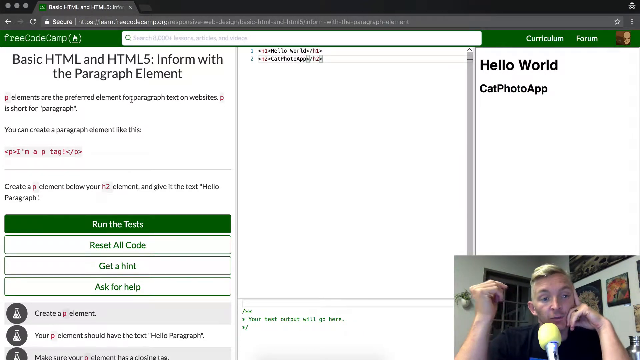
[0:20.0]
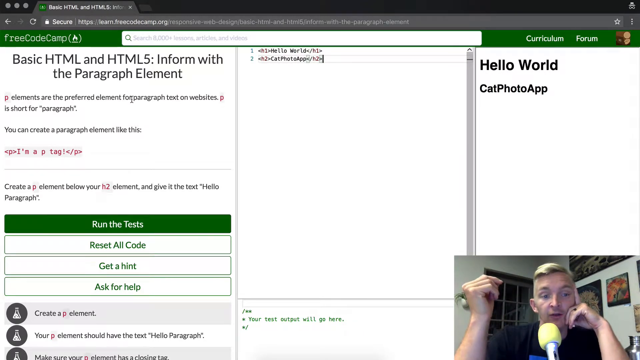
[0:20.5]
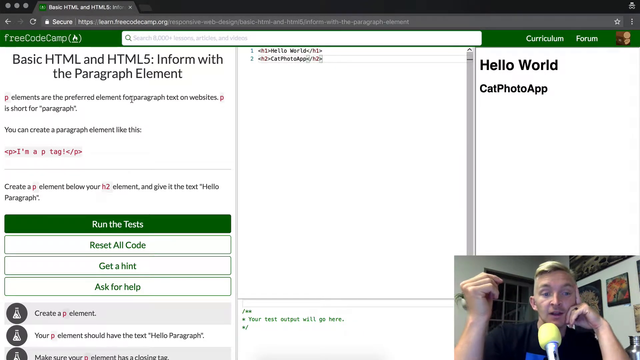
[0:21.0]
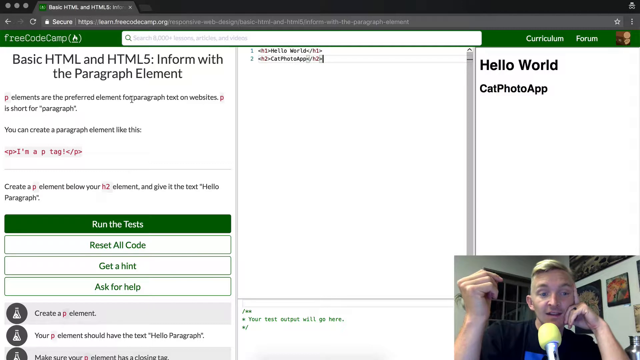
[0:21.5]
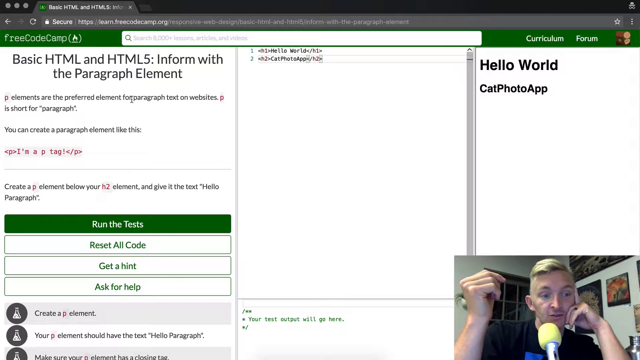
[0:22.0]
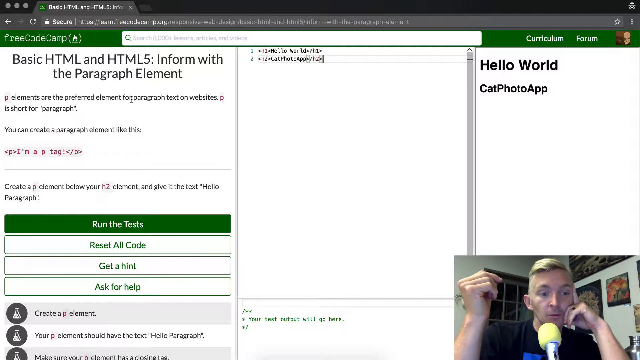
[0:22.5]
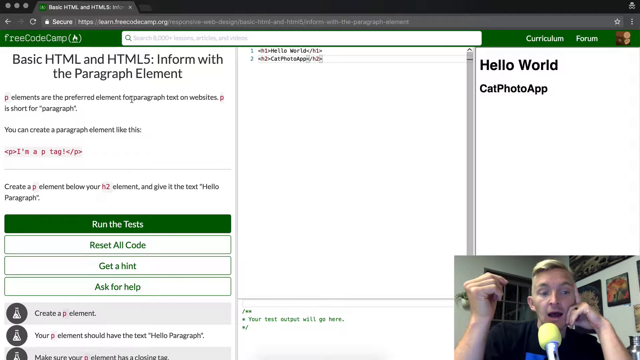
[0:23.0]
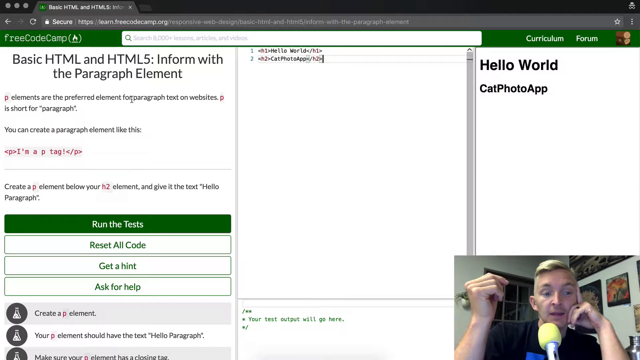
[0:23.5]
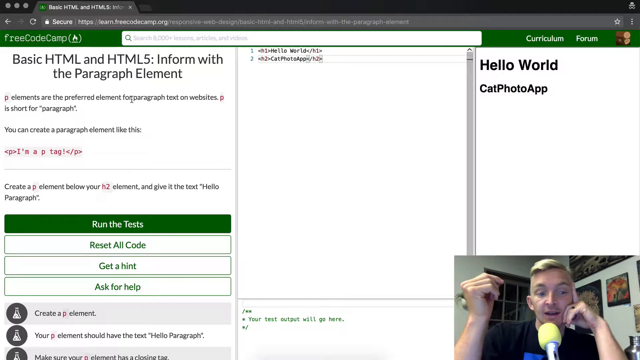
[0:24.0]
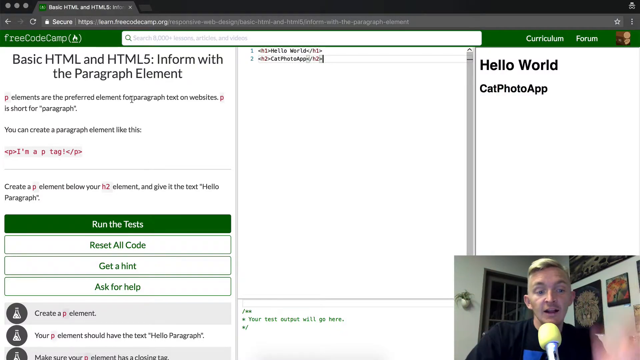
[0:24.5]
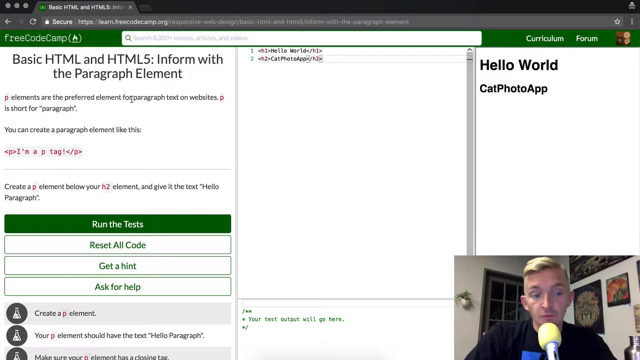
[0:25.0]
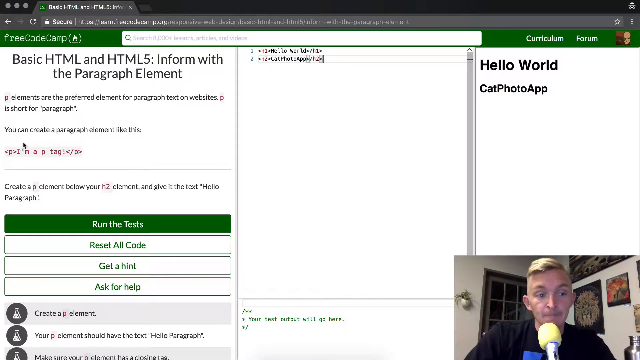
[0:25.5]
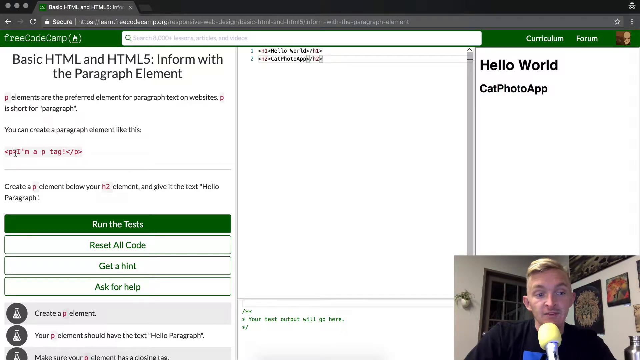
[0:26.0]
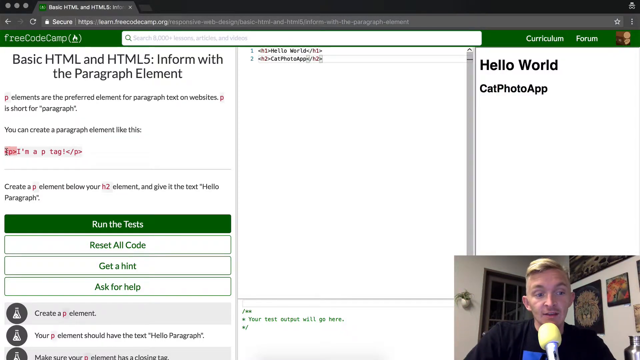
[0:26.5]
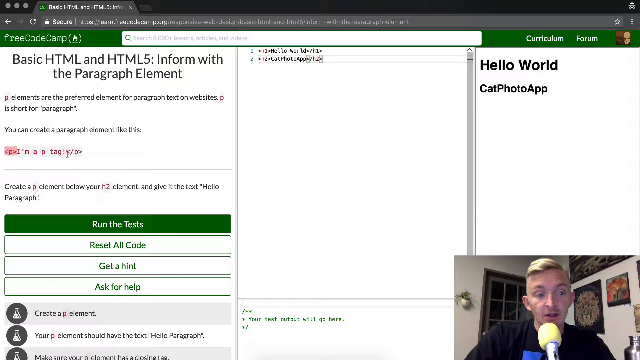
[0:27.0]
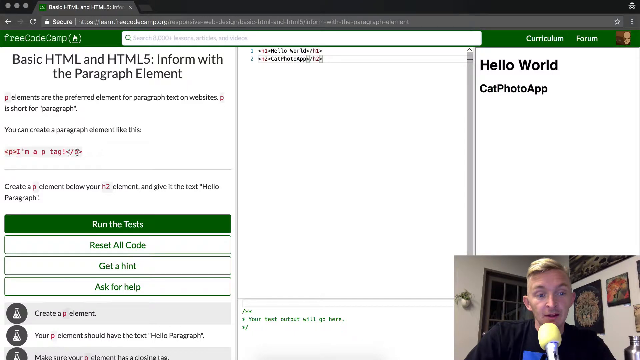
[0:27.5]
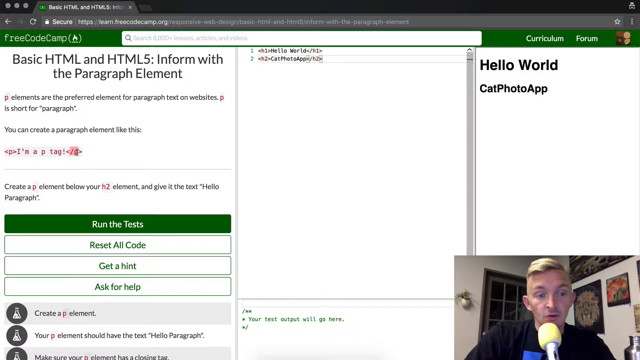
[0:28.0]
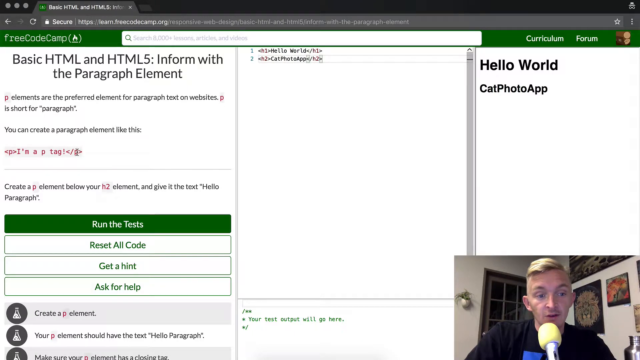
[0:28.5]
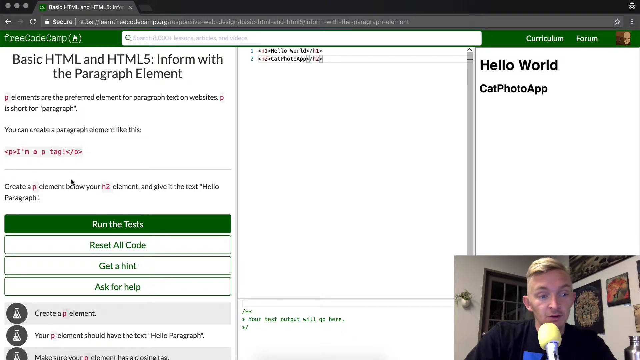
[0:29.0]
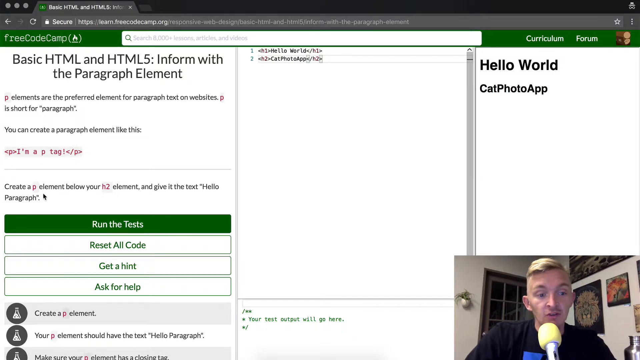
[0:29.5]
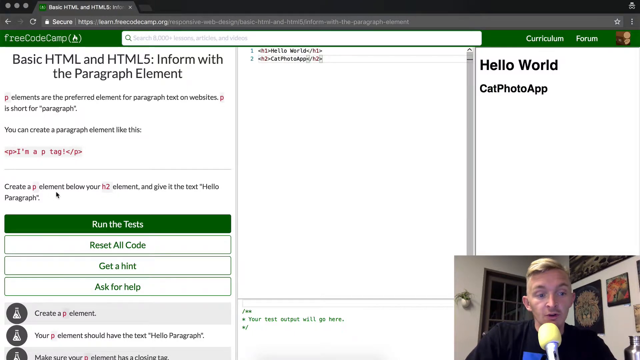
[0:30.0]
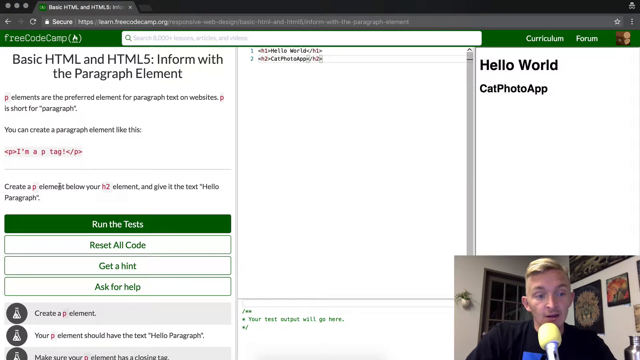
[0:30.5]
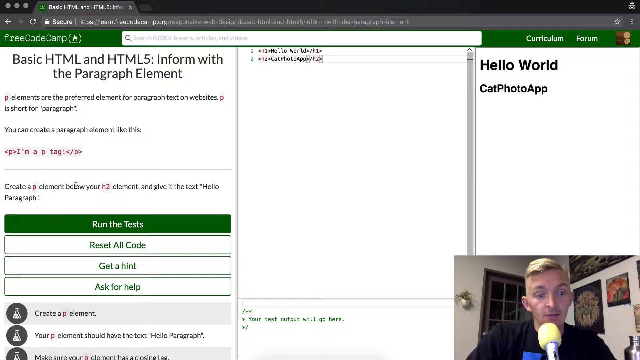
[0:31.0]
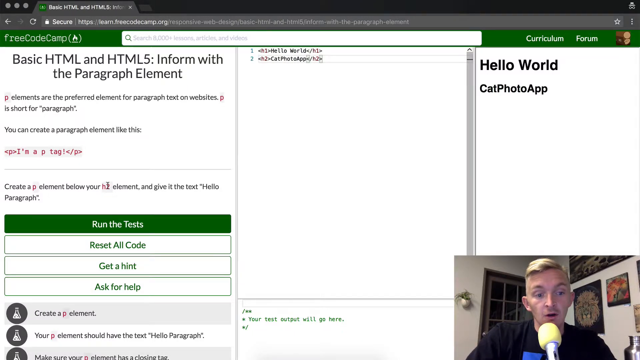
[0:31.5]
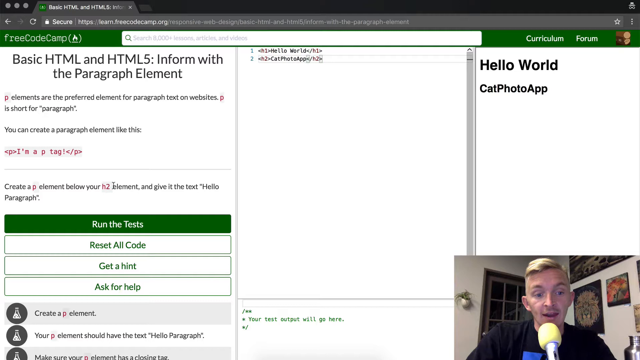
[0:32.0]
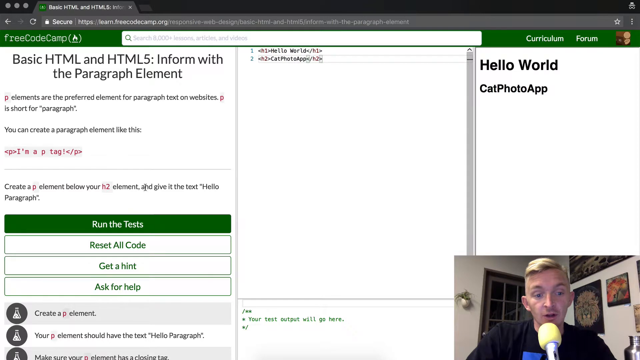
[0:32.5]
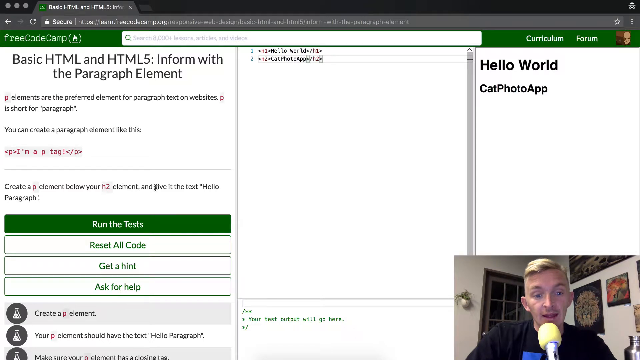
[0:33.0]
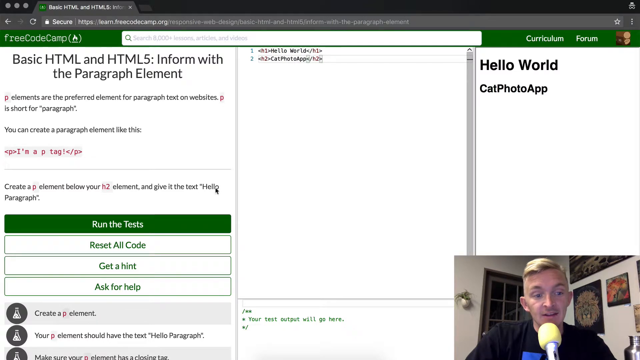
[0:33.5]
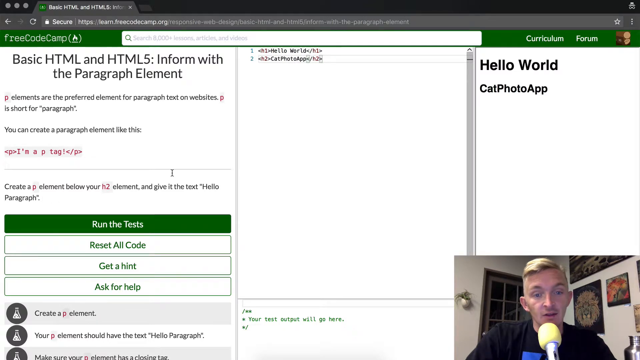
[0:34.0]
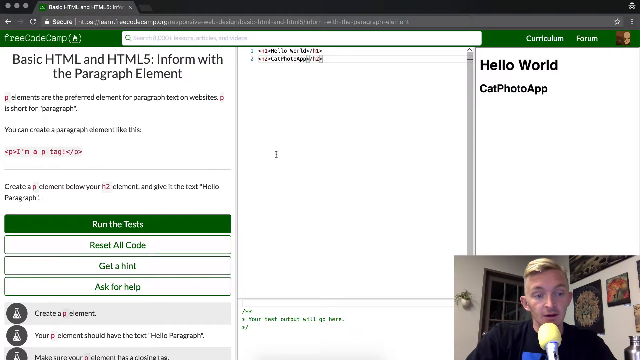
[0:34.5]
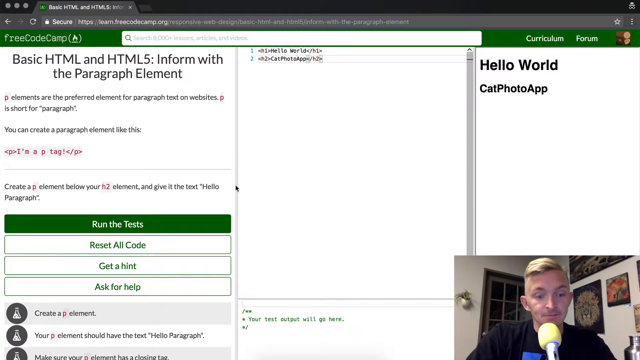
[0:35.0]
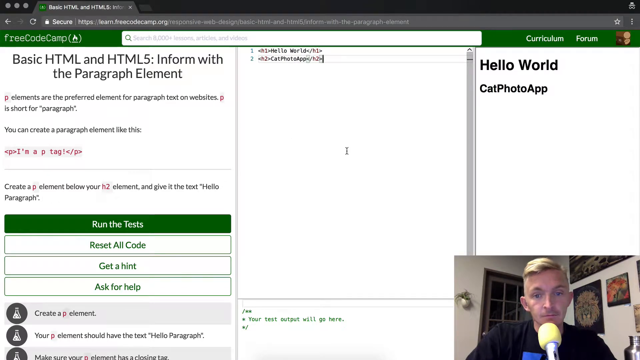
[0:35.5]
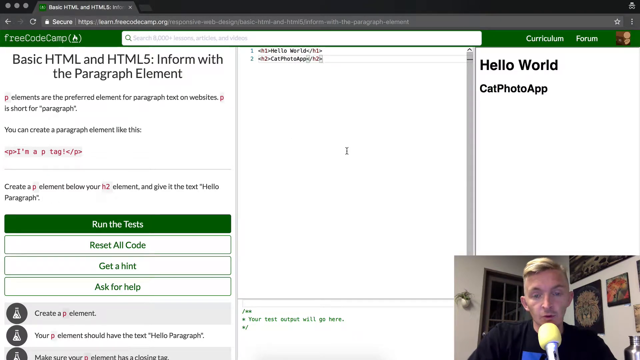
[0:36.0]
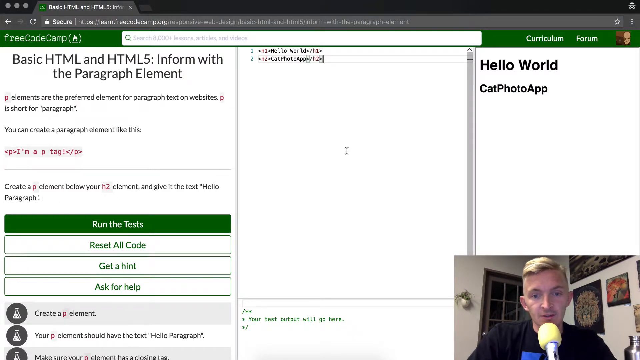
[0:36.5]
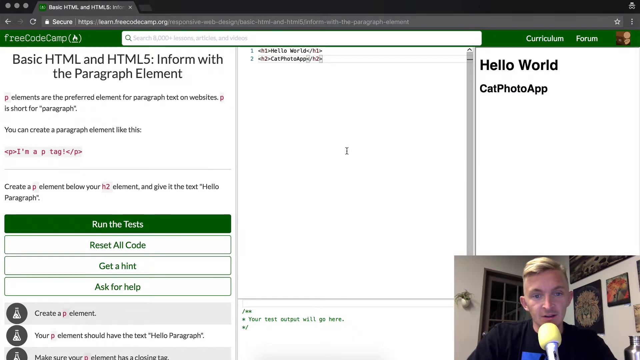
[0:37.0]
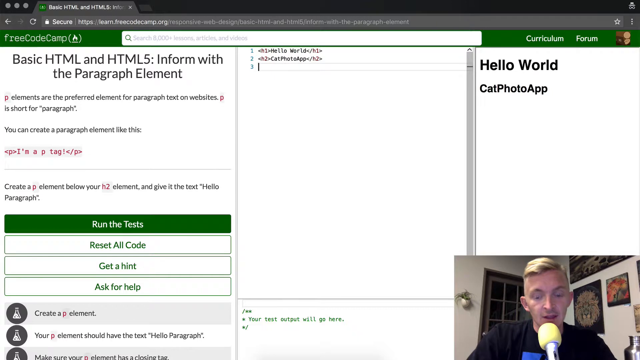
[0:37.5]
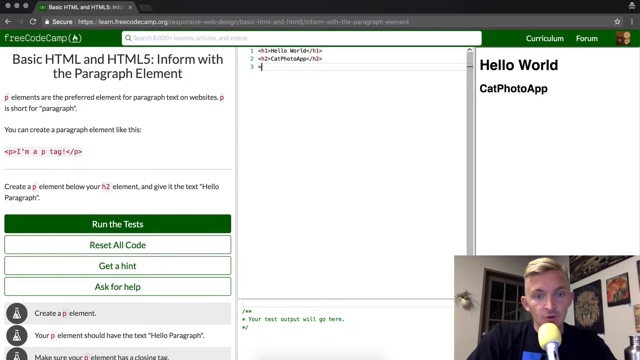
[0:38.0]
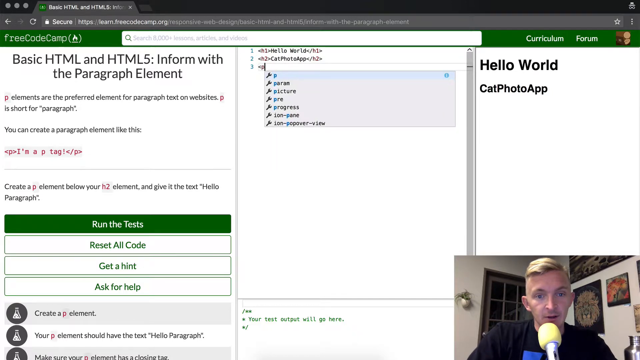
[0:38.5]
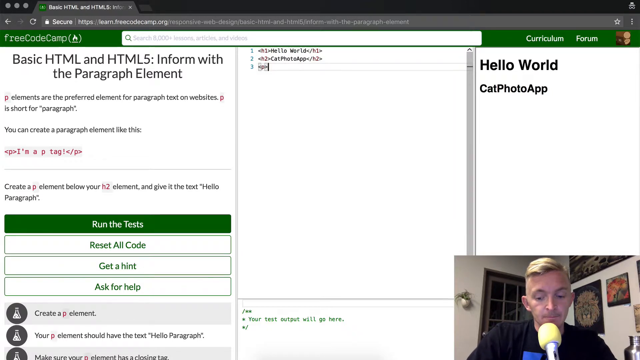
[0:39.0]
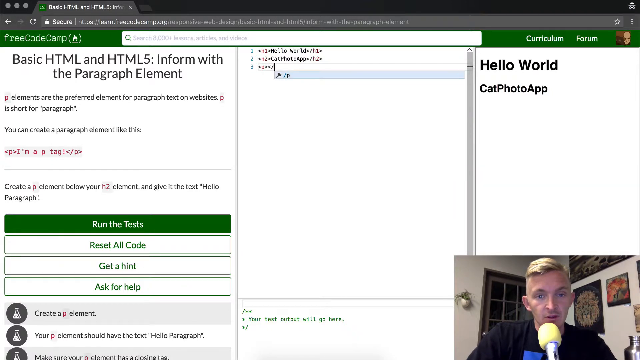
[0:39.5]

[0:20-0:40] The page shows options reading "run the test", "reset all code", "get a hint" and "ask for help". The man continues talking, and a mouse cursor moves around the screen, pointing at words. The name Free Code Camp is written noticeably in the video, and "hello world" and "chat photo app" appear in the corner of the screen. The man seems to be talking about the information displayed on the screen about Free Code Camp and the subjects available on the website for free.